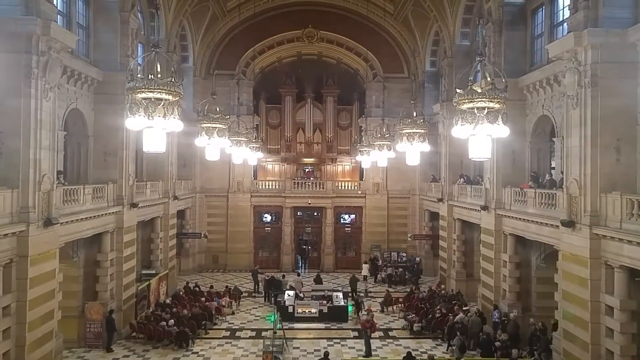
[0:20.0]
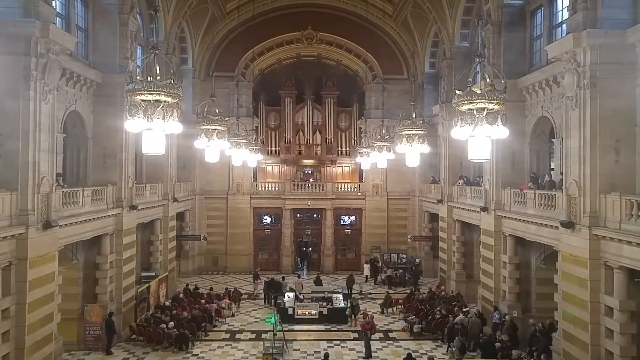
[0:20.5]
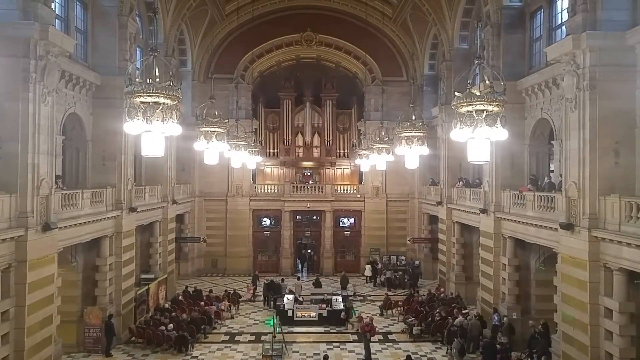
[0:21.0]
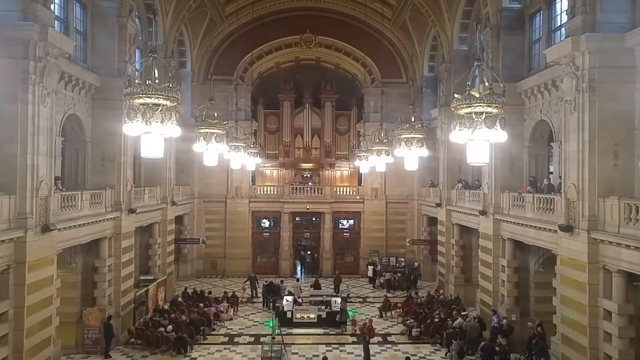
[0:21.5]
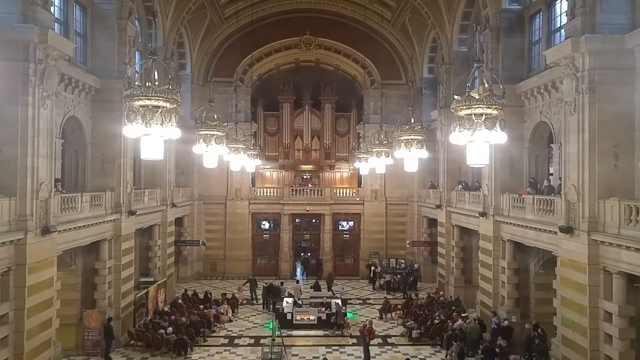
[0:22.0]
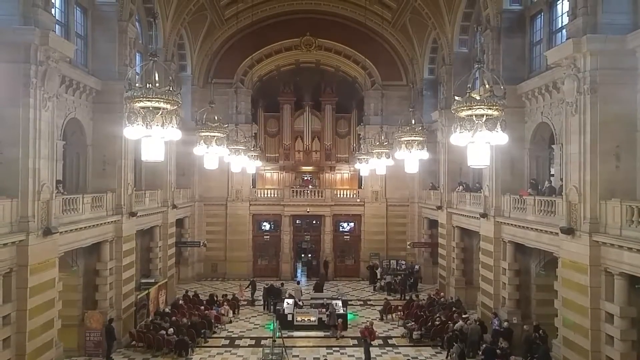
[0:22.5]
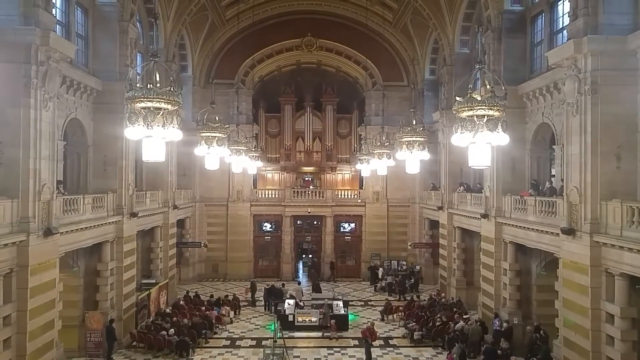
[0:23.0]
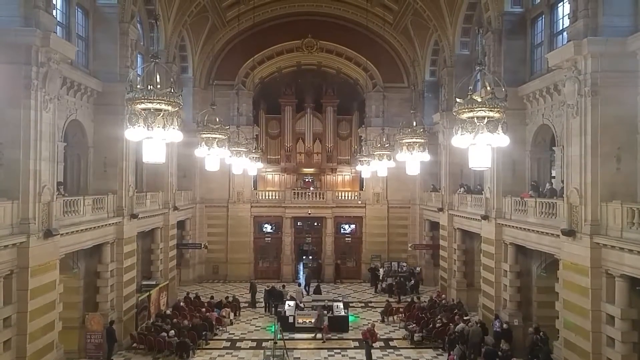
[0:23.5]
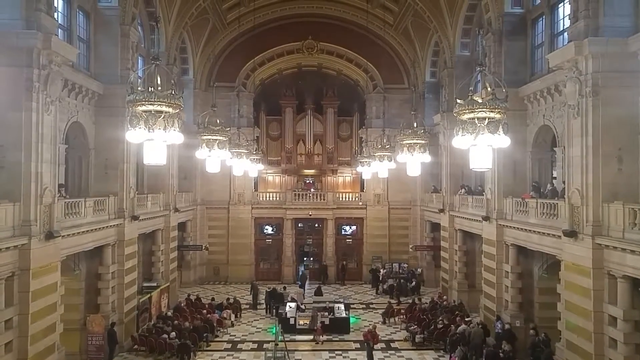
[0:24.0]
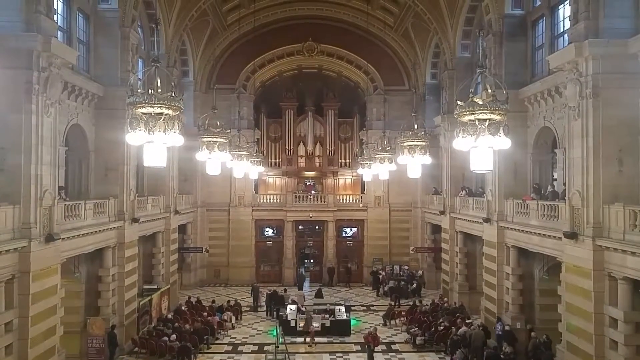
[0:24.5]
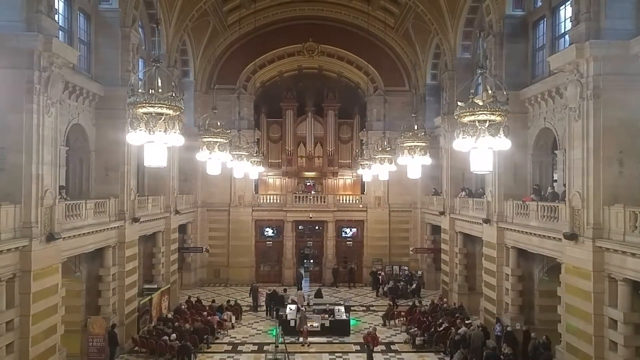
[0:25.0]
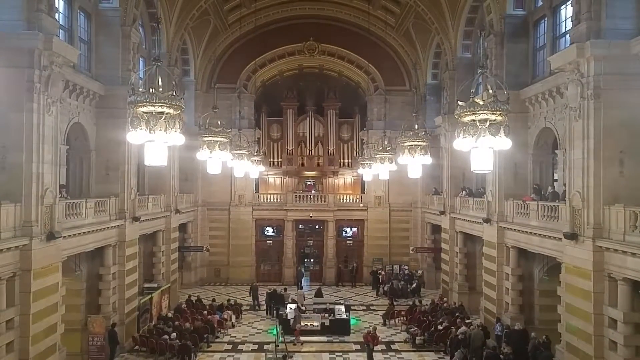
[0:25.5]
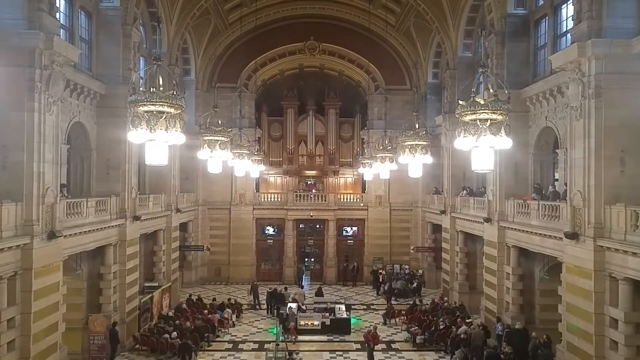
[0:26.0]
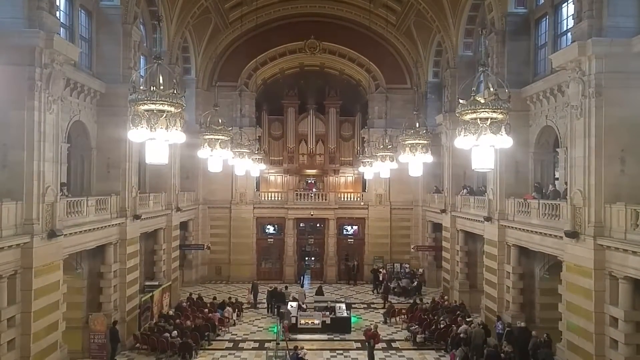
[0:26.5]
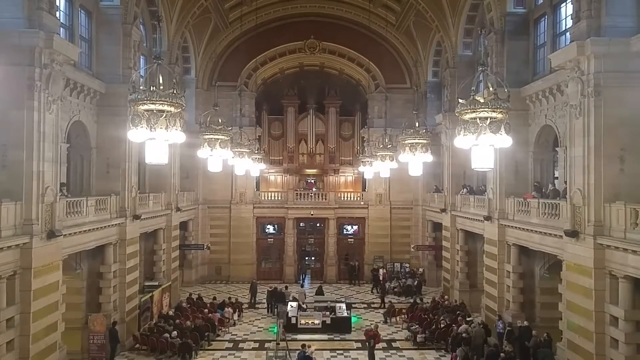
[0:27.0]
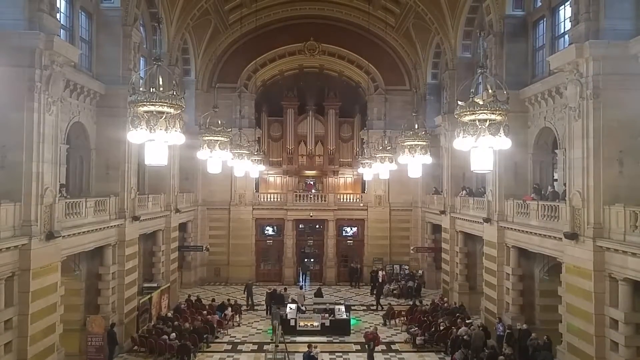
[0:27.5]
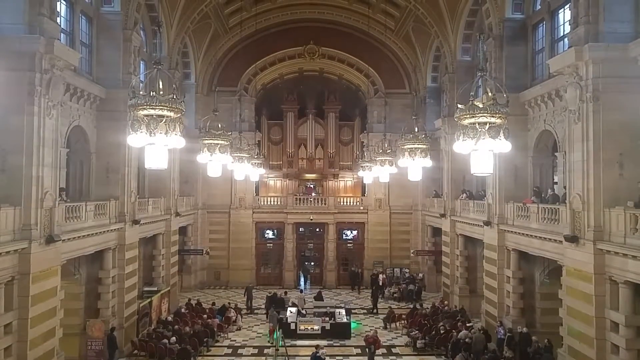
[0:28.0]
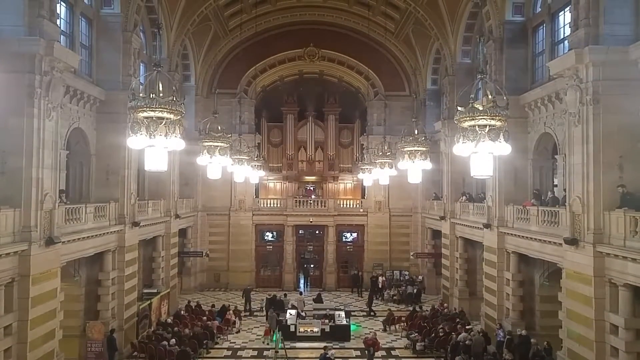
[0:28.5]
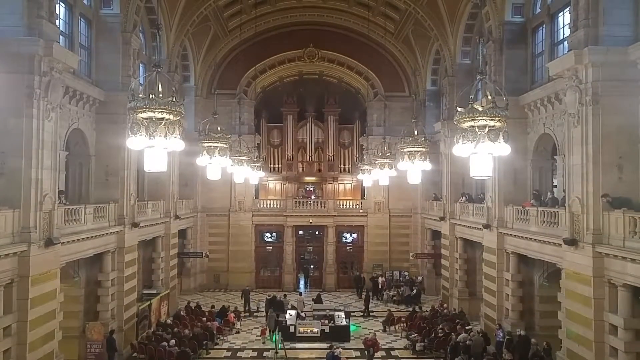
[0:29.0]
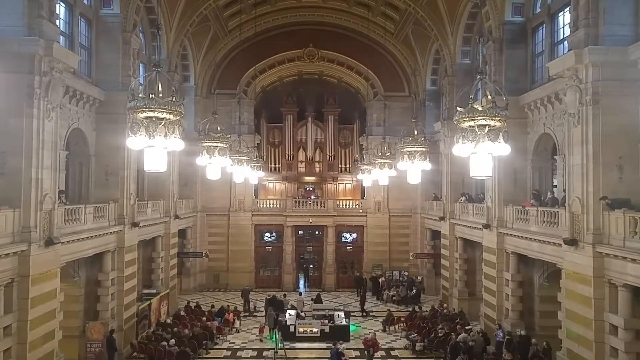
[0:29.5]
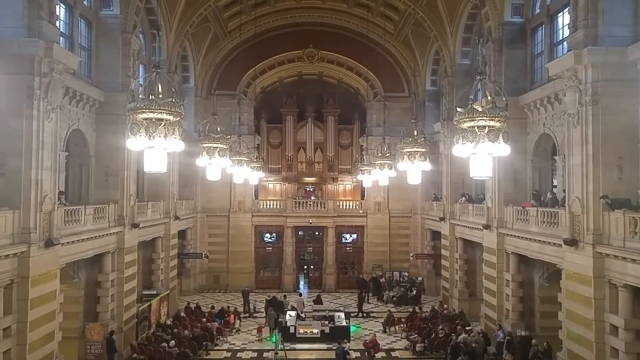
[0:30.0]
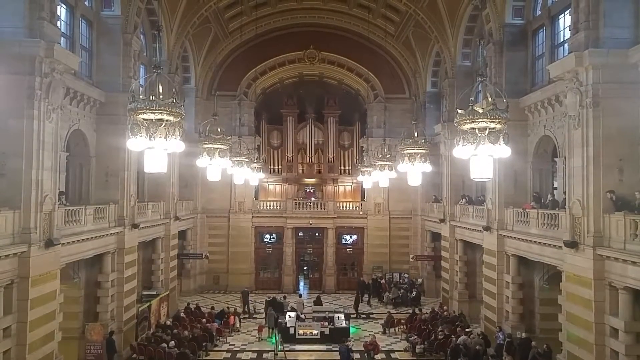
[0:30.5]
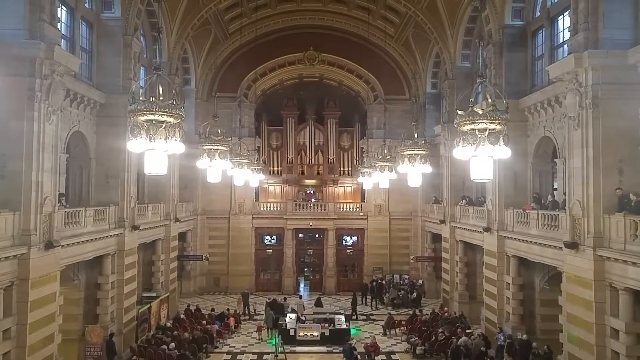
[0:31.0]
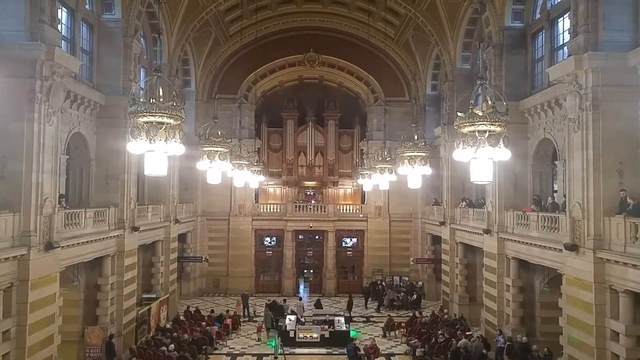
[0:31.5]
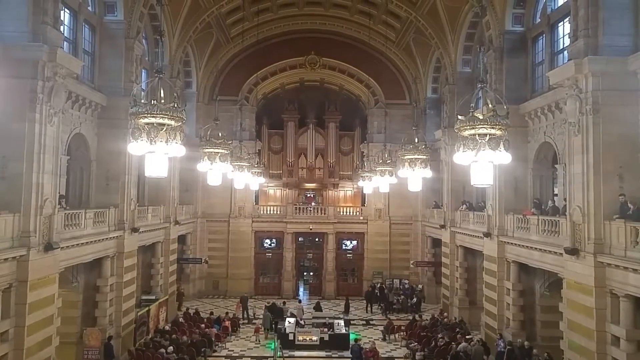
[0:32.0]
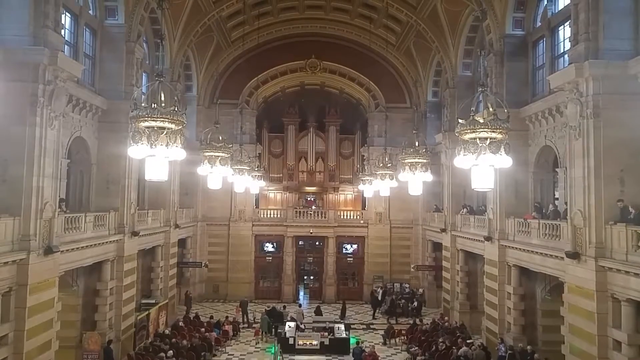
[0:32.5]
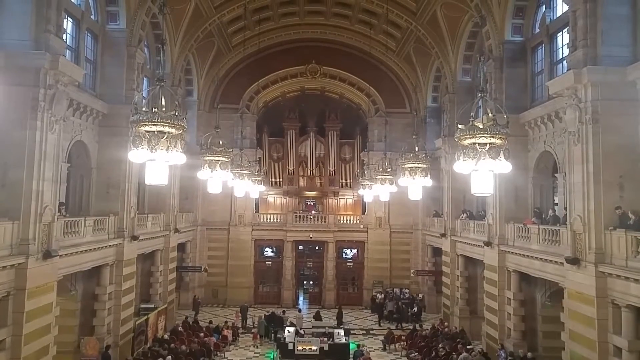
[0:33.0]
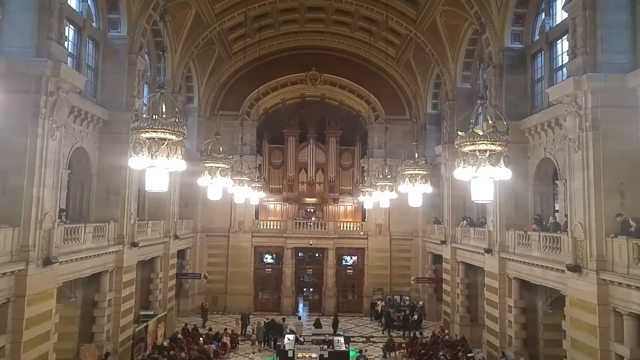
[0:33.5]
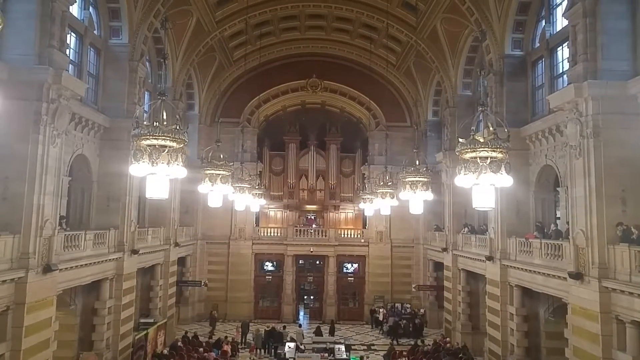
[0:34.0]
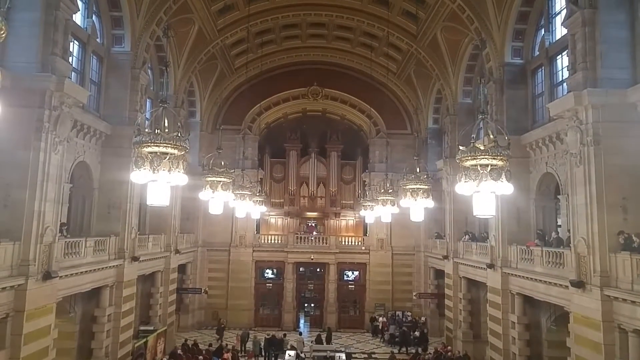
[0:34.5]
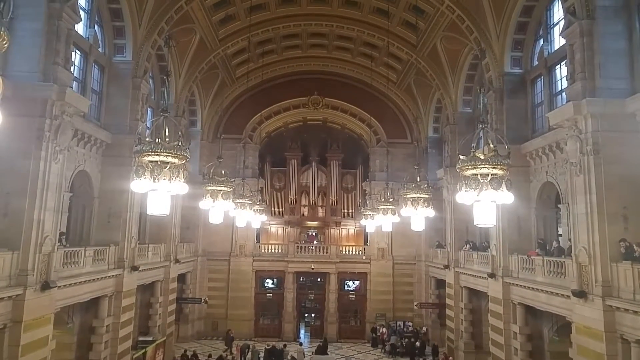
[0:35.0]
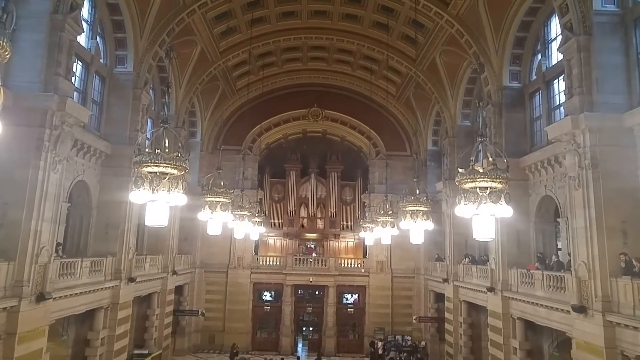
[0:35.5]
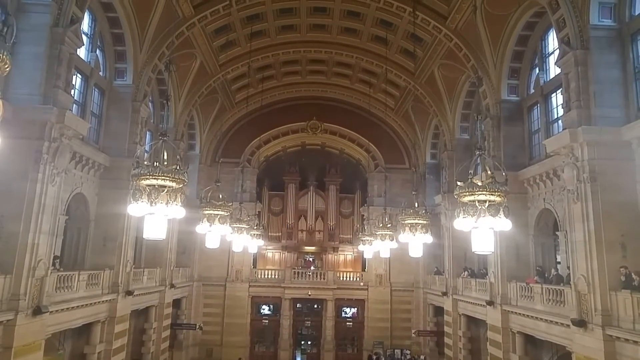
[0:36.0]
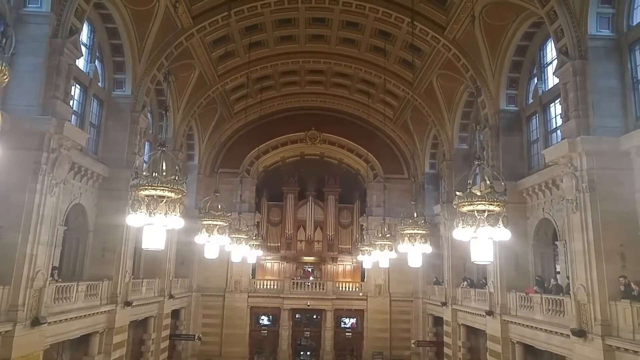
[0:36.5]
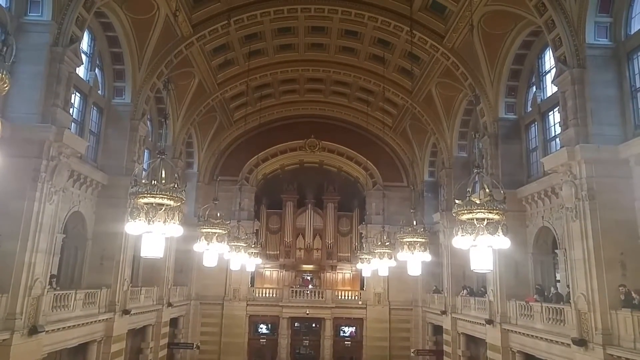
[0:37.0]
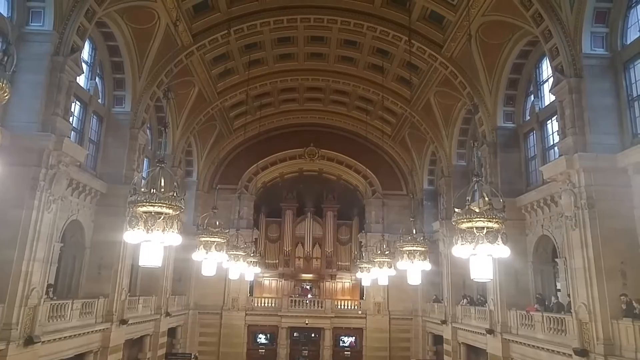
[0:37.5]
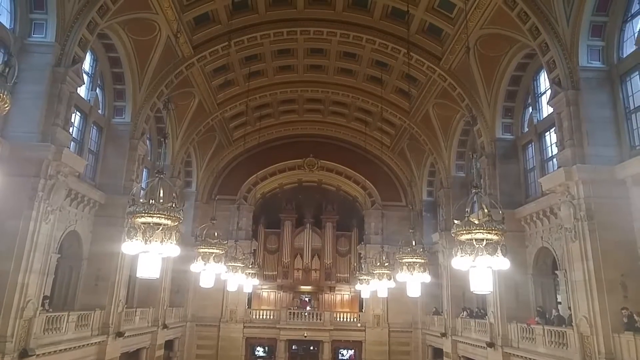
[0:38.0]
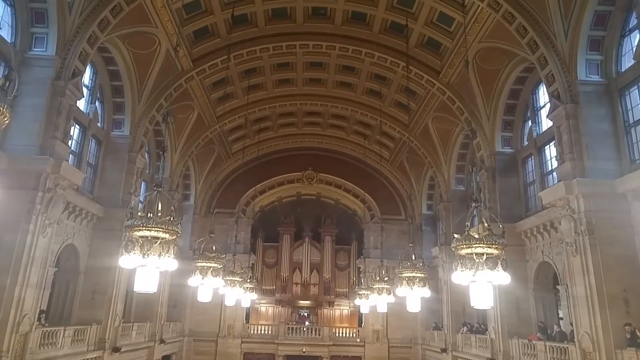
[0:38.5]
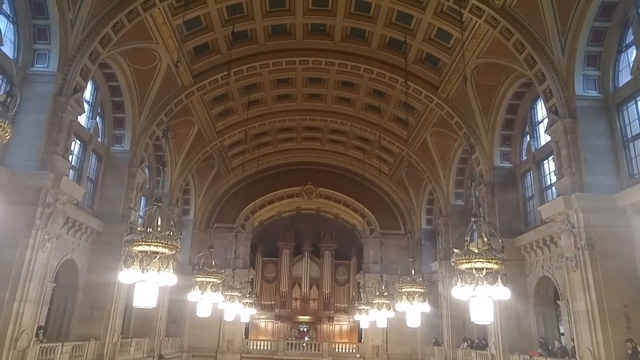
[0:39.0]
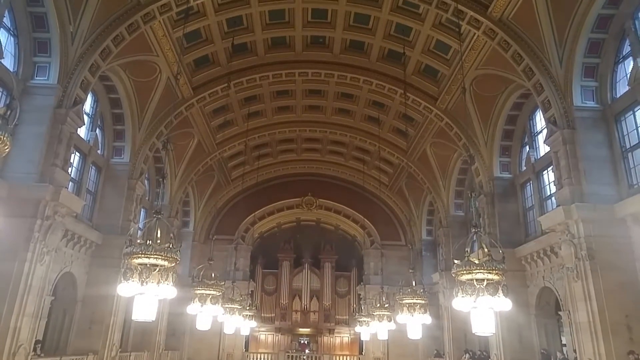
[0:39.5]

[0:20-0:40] A very large arc inside a building is shown. In the center of the arc are three doors at the bottom, and a second floor has rails all around it. People are gathered standing against the rails on the second floor. Eight large light fixtures hang down from the ceiling. On the bottom floor, people are seated in chairs on either side of the church, and there is also a group of people near the doors. The doors are brown and likely wooden. Various windows are visible at the very top of the church. The lighting is very bright from both the sun and the light fixtures inside the church. The camera then pans back upward toward the ceiling, which is also shaped in a very large and wide arc.